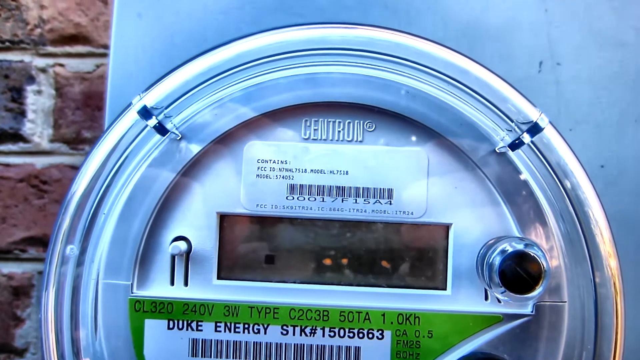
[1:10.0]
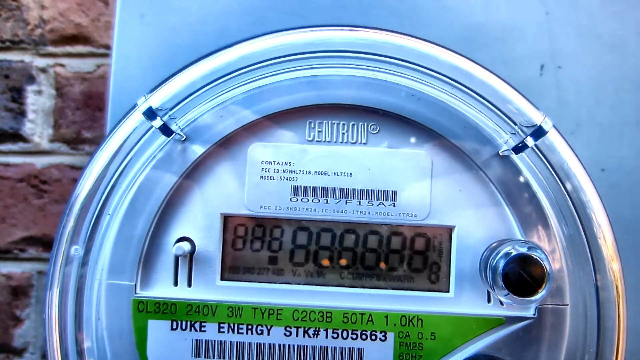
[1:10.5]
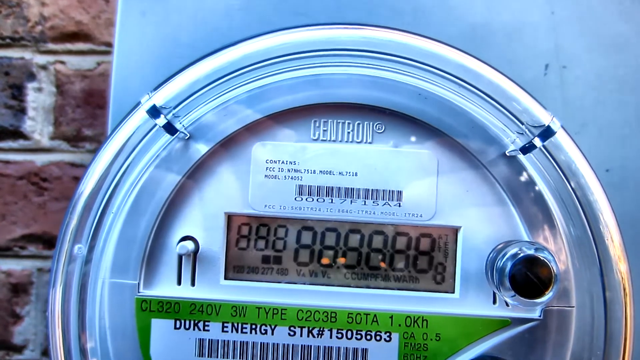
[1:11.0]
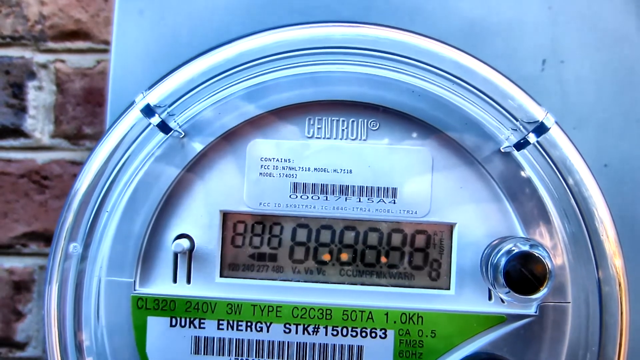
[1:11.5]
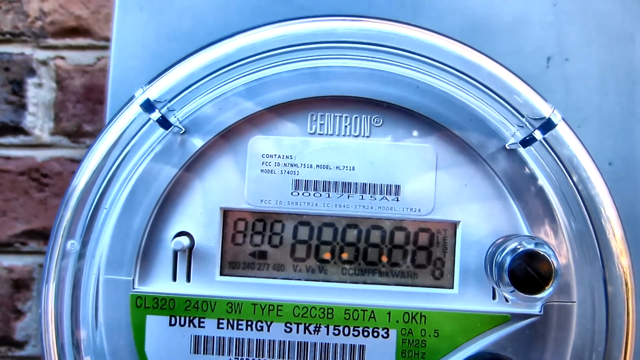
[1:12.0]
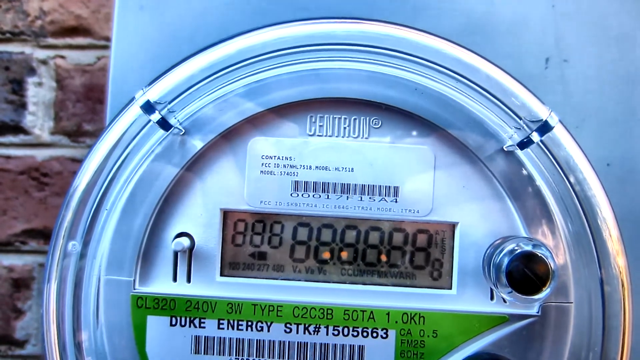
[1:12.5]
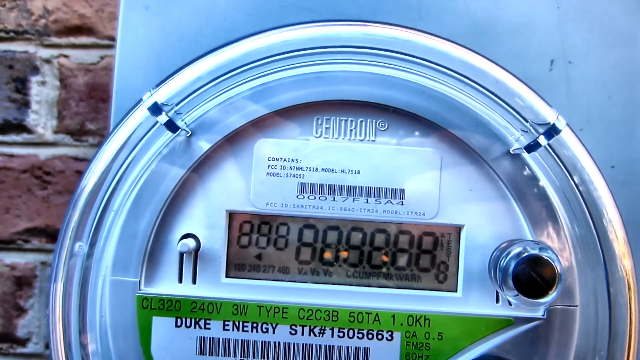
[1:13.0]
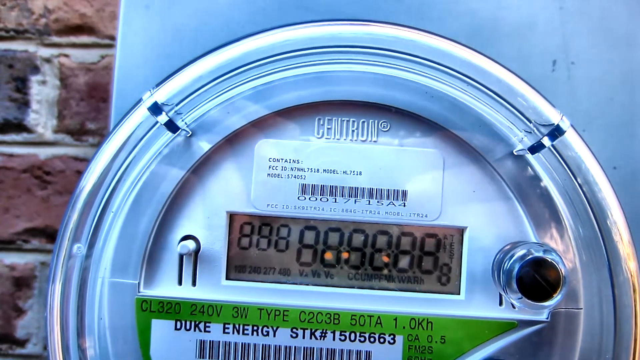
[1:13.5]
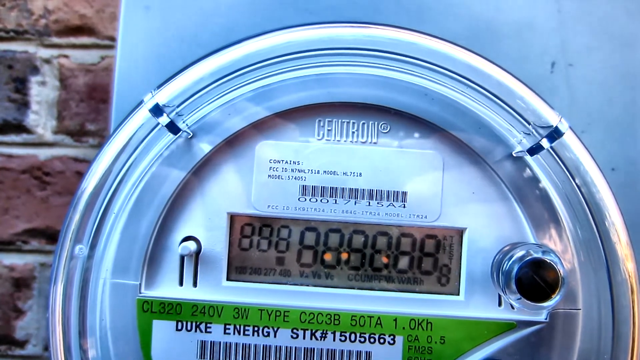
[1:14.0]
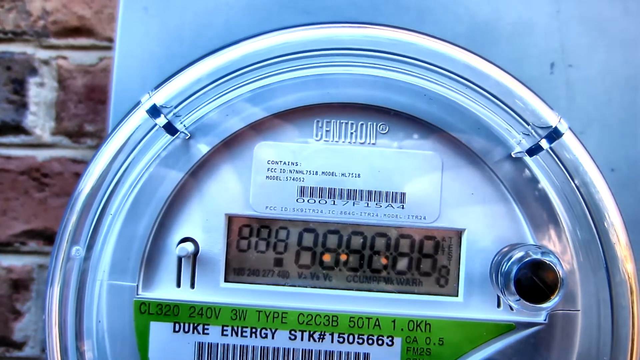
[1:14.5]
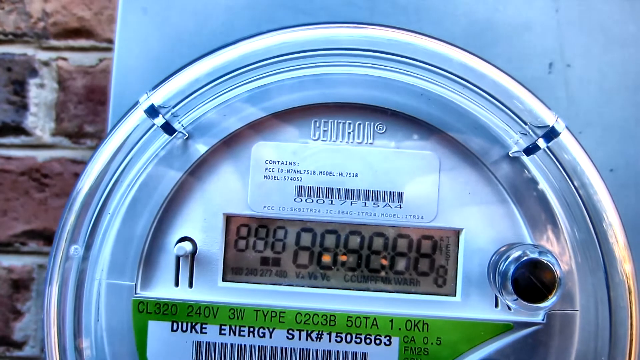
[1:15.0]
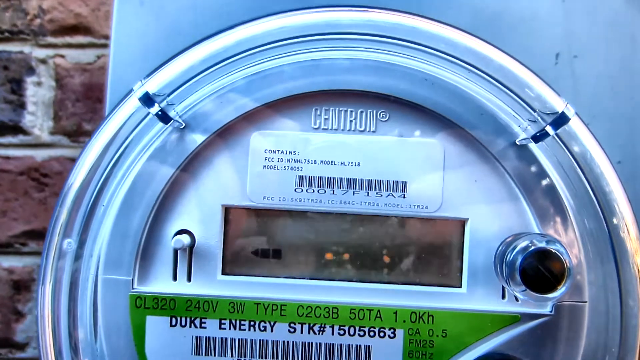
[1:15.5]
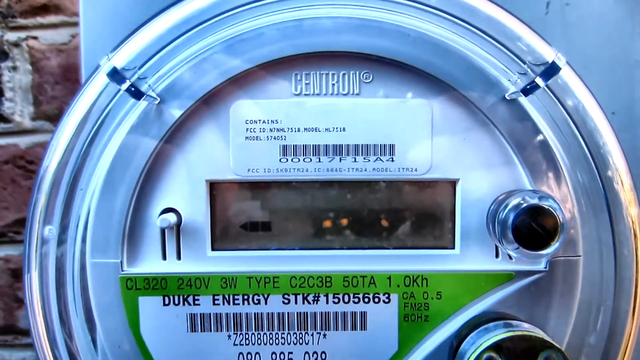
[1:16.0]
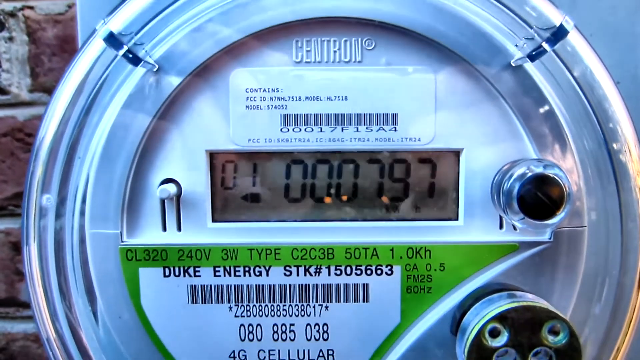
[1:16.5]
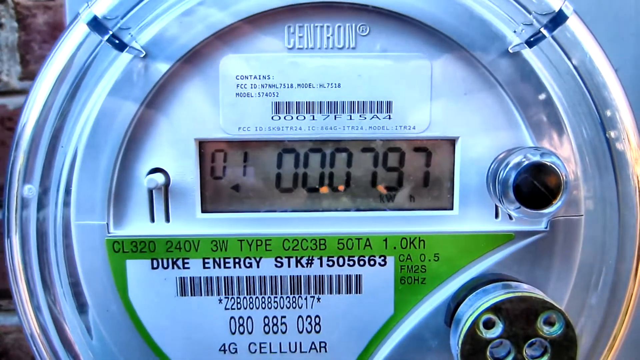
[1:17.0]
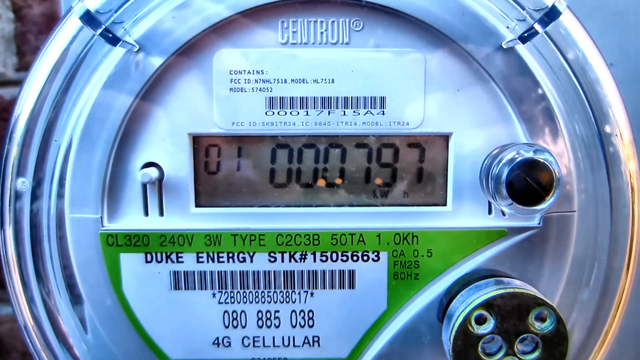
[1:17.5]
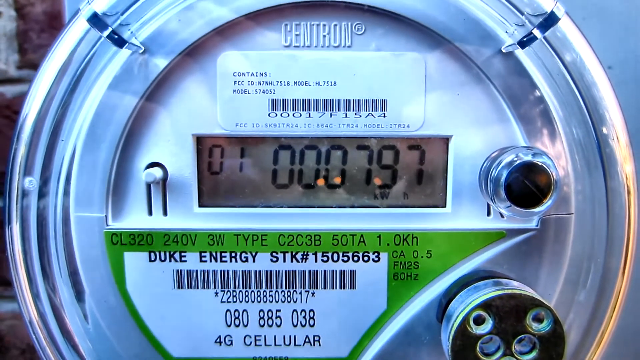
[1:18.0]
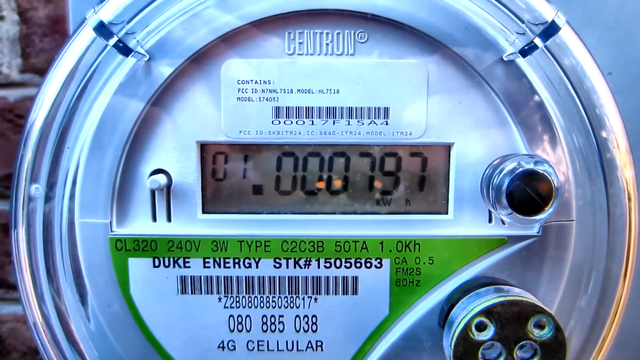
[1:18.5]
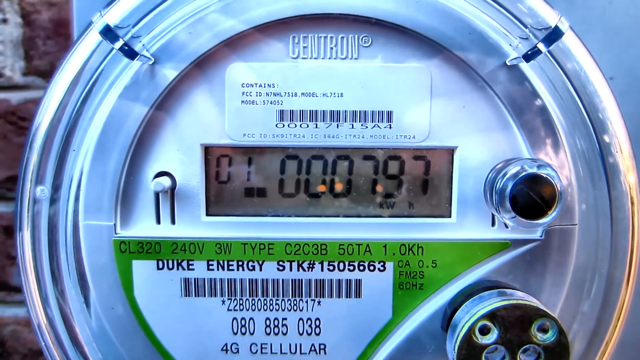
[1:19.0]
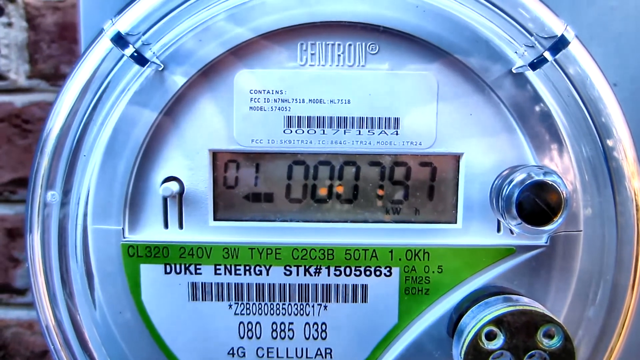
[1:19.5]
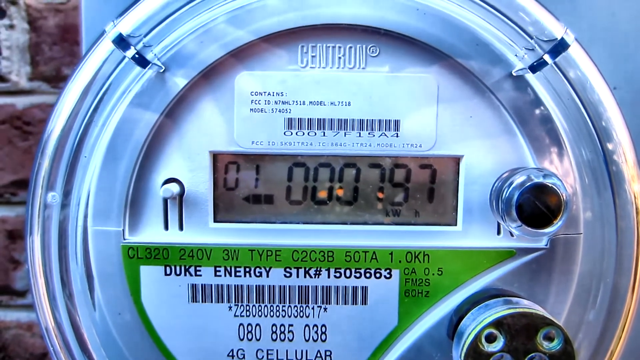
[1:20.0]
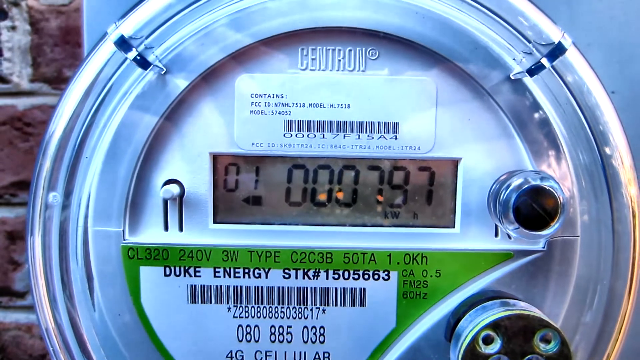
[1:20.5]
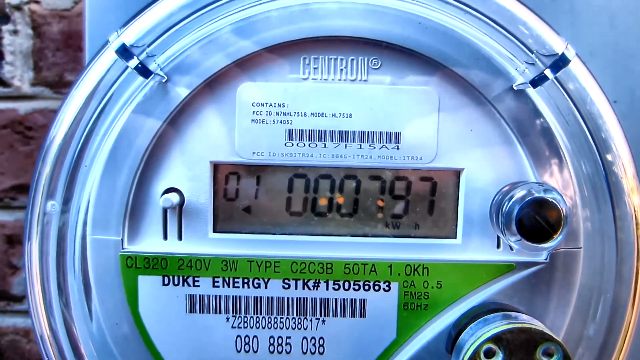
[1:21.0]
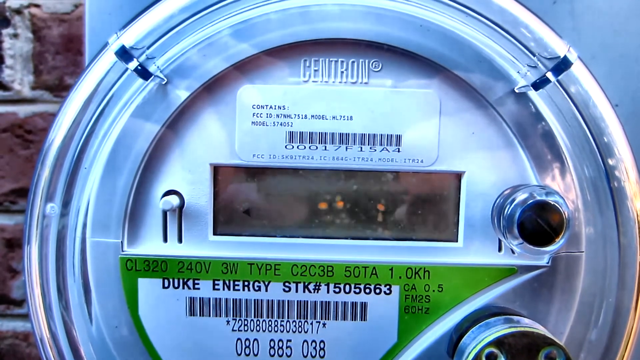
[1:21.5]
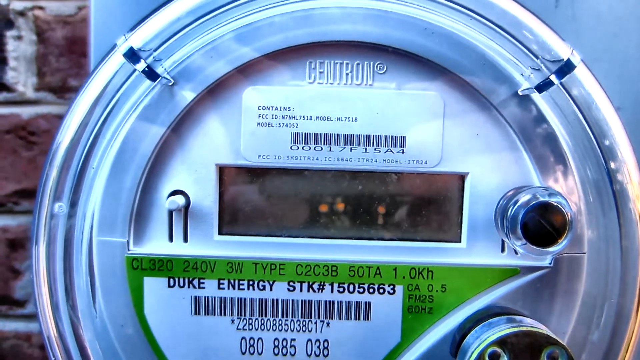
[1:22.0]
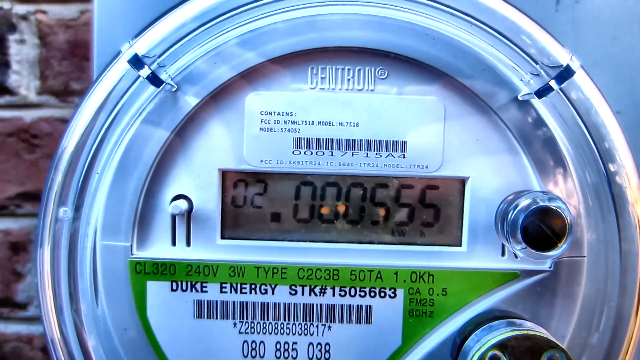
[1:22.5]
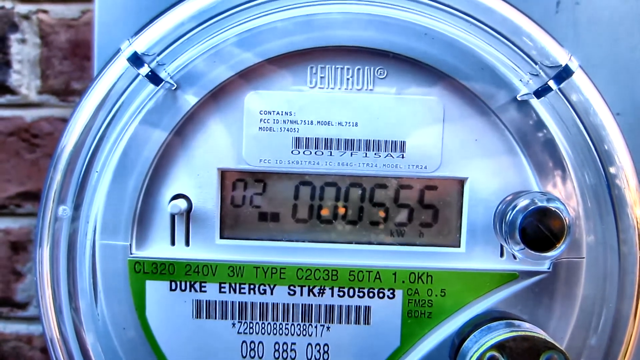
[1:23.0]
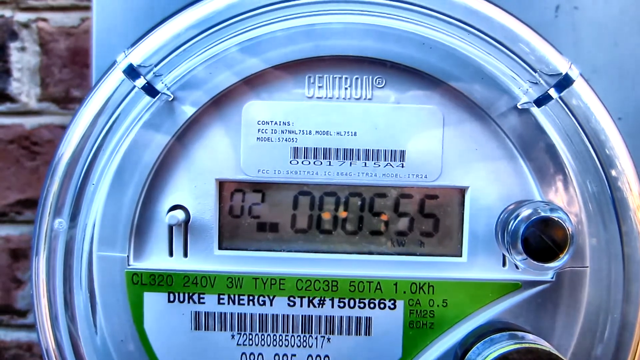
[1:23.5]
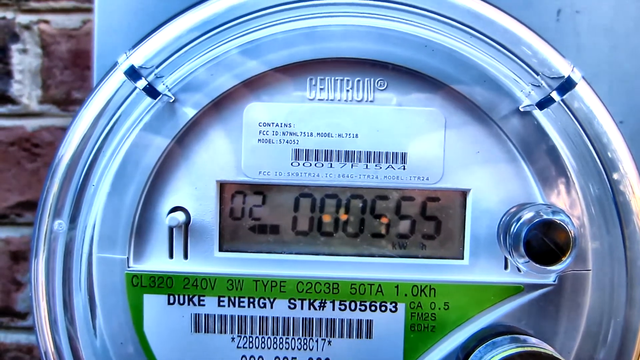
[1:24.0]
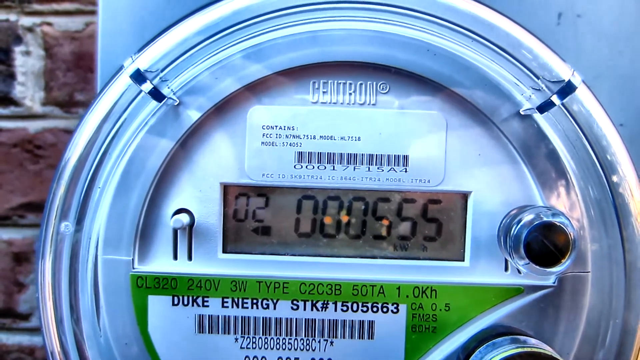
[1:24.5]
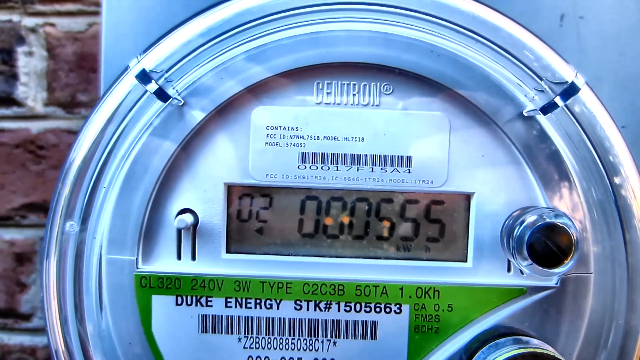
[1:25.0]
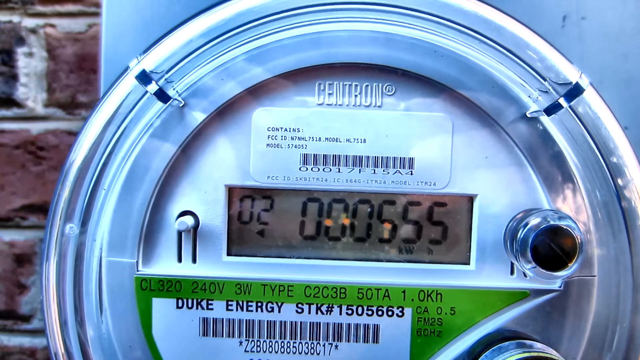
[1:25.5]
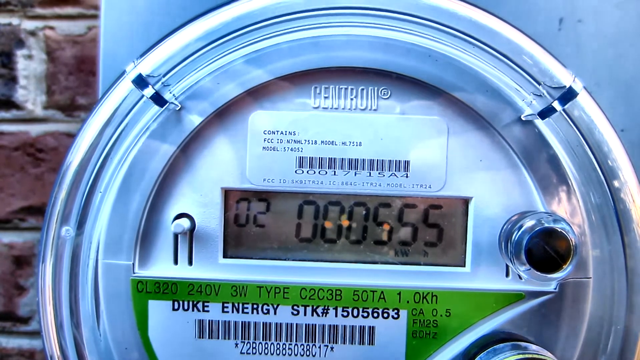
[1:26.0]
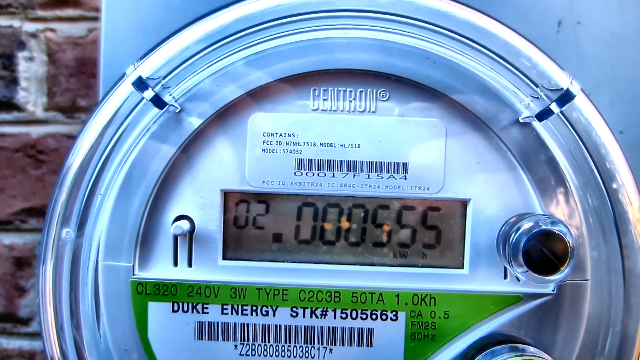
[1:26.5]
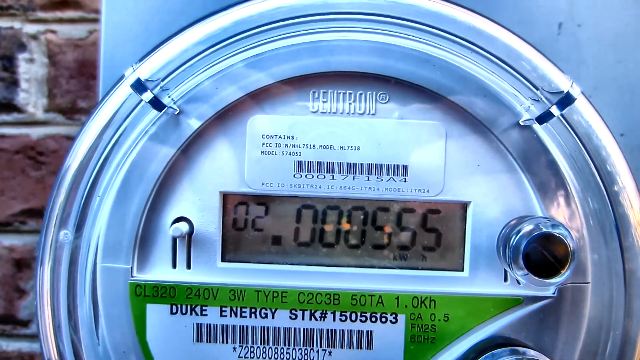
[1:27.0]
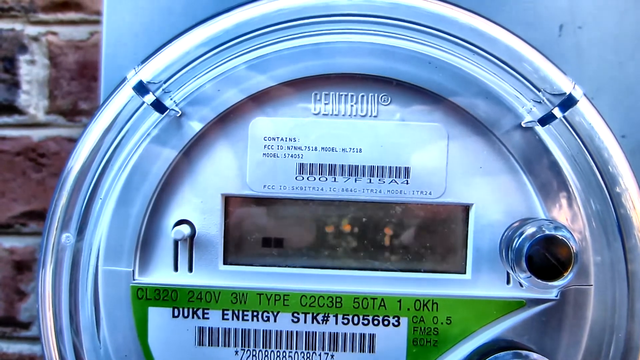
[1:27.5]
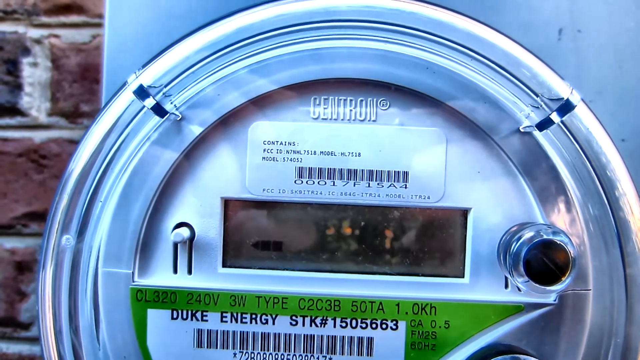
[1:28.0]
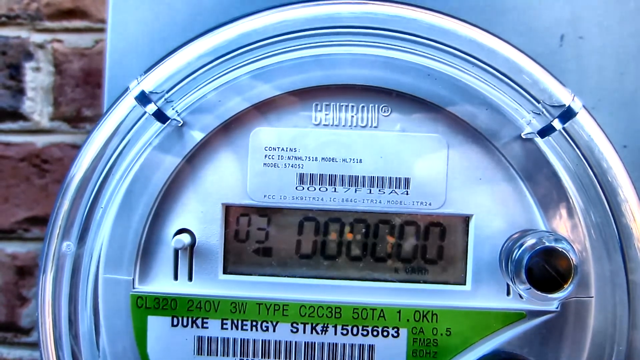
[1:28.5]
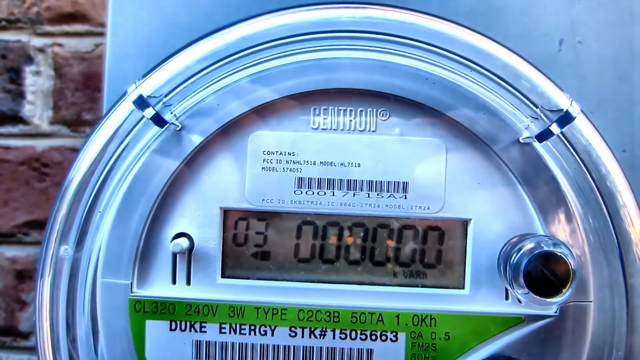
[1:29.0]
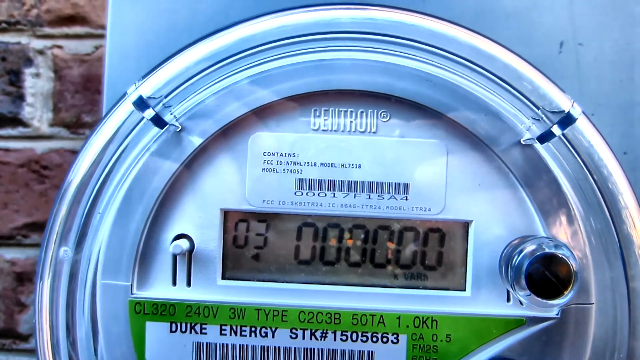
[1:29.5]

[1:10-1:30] The meter is shown a little closer. It is a silver circle that looks almost like a compass or a round stopwatch, and right behind it is the brick of the house. Inside the circle is a rectangle with stopwatch-style numbers that change from six zeros to blank, then to "000797", blank again, then "000555", and then back to six zeros. The meter looks like a silver box with a round silver metallic circle, and the rectangular reader is in that circle. Above the reader is a white rectangular sticker with a barcode, like the stickers scanned on items at a store, and above the sticker "CENTRON" appears in raised silver block letters that are part of the meter.